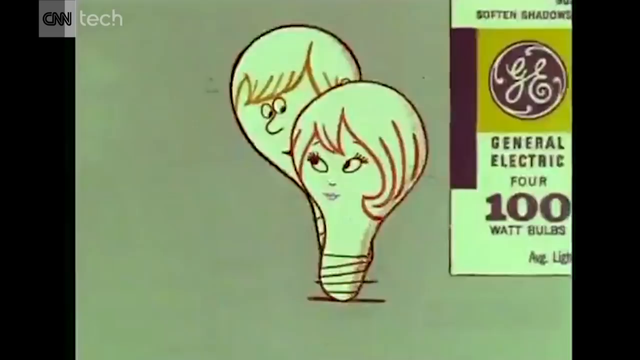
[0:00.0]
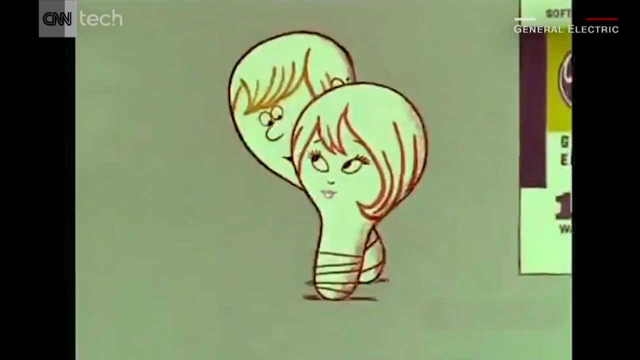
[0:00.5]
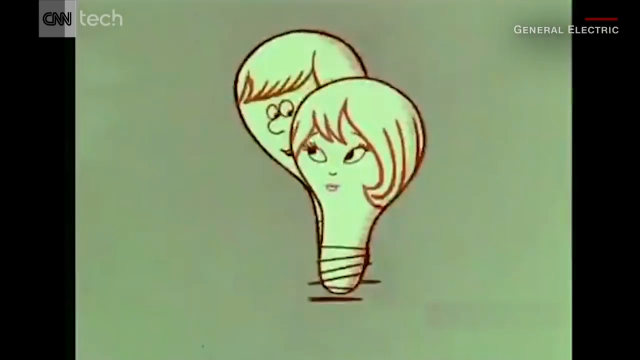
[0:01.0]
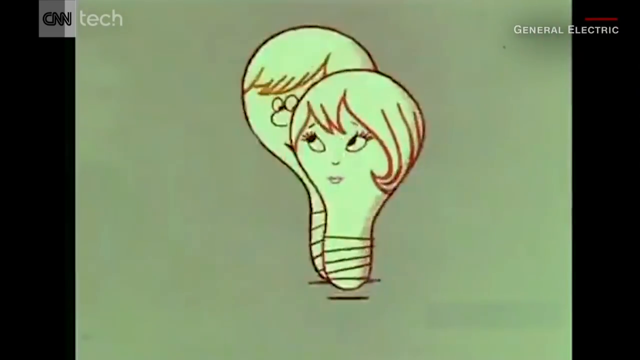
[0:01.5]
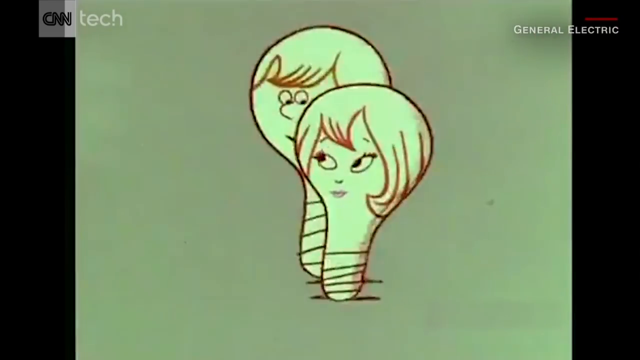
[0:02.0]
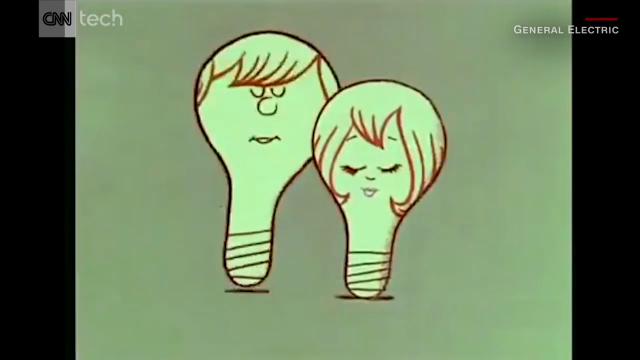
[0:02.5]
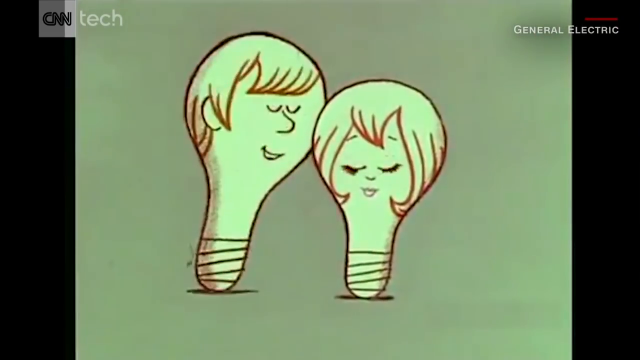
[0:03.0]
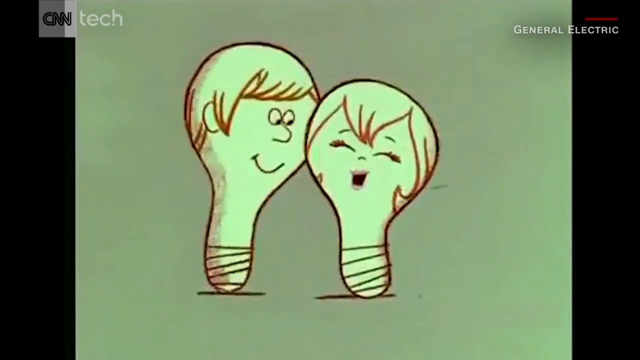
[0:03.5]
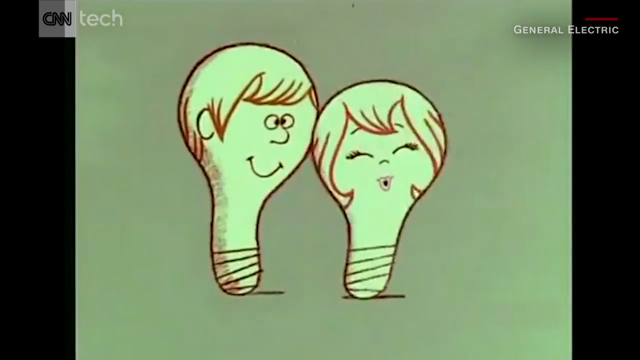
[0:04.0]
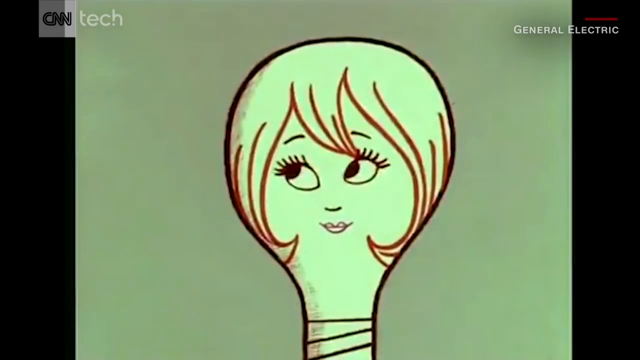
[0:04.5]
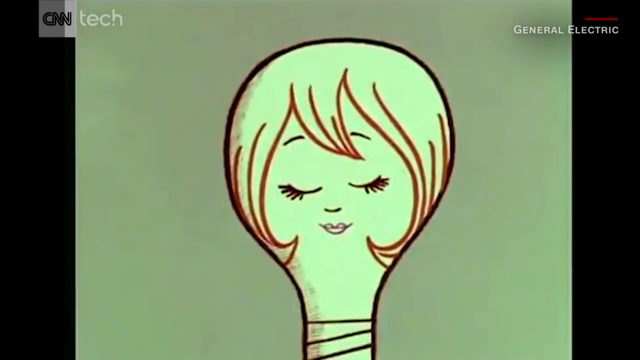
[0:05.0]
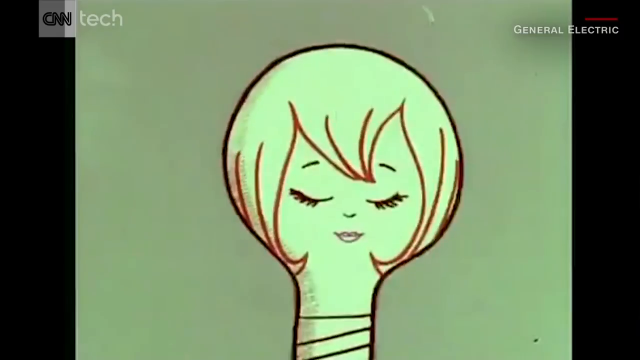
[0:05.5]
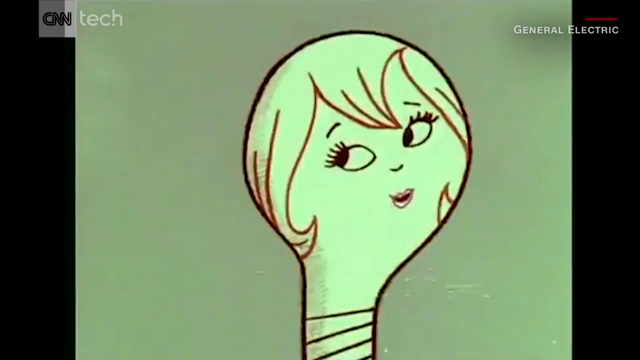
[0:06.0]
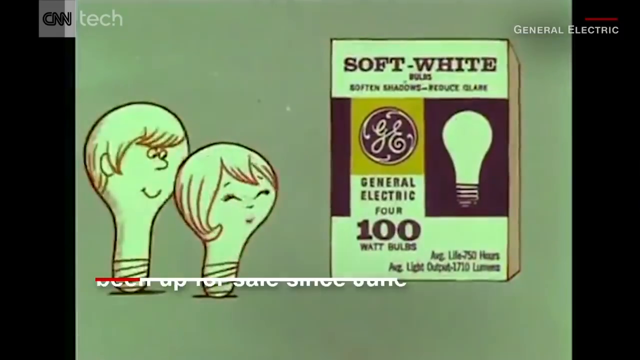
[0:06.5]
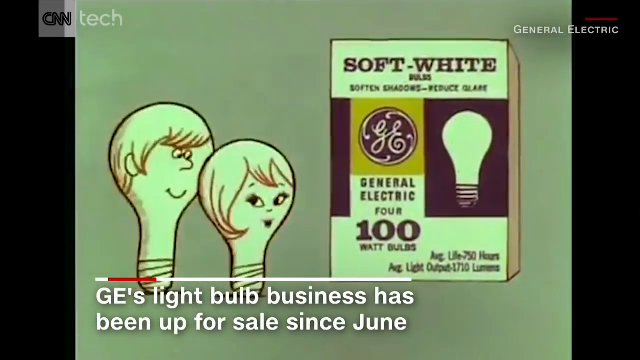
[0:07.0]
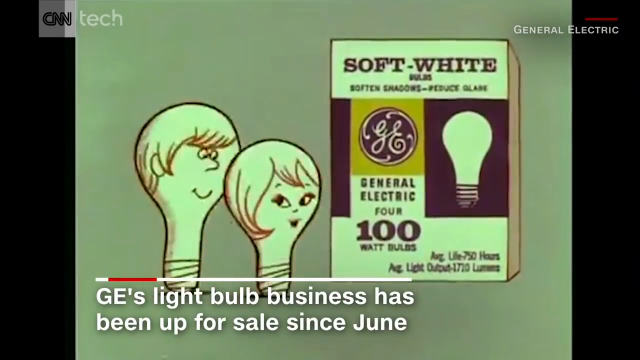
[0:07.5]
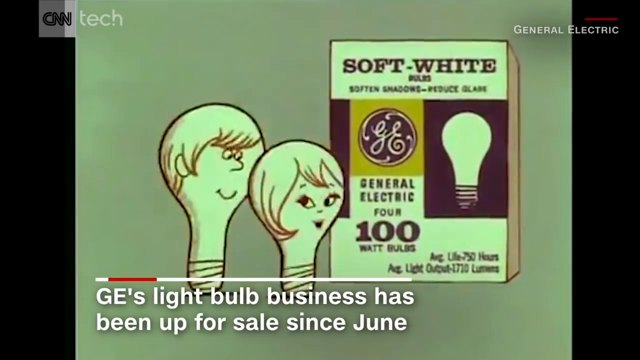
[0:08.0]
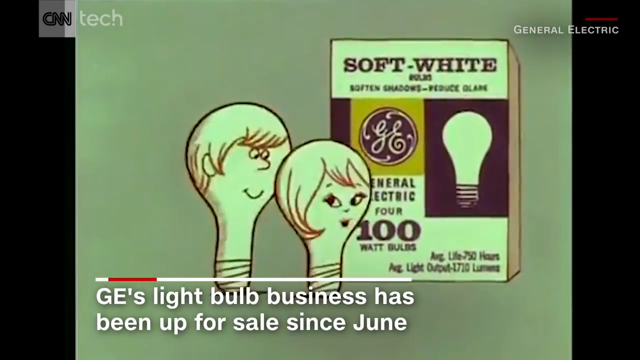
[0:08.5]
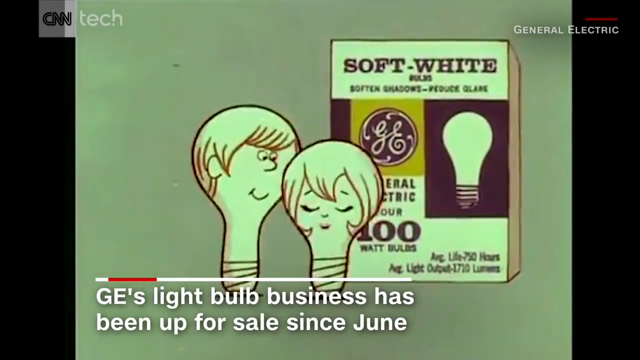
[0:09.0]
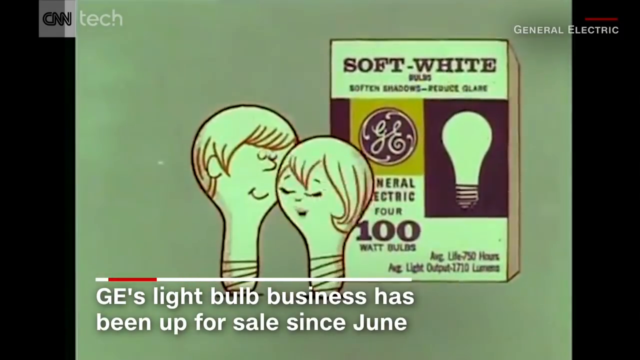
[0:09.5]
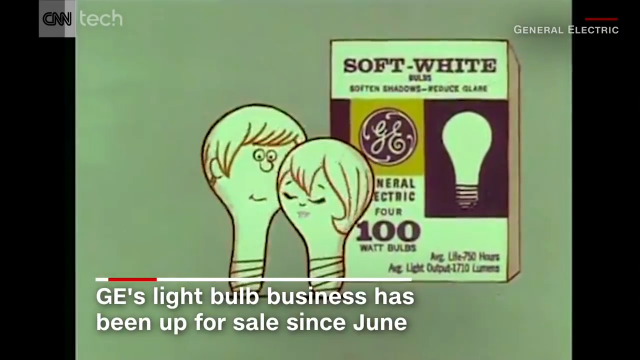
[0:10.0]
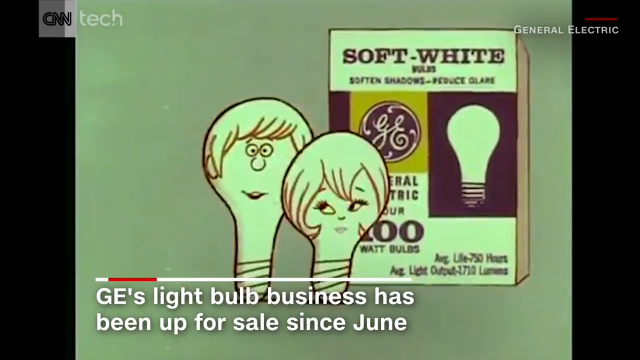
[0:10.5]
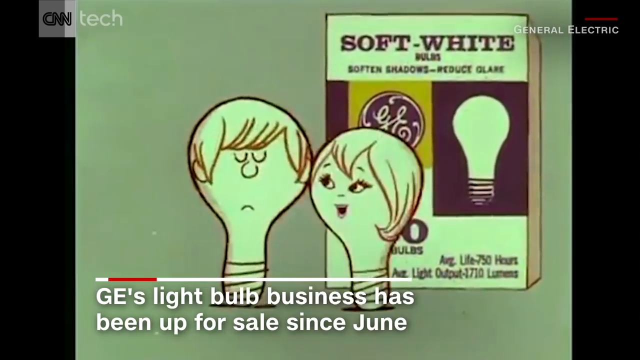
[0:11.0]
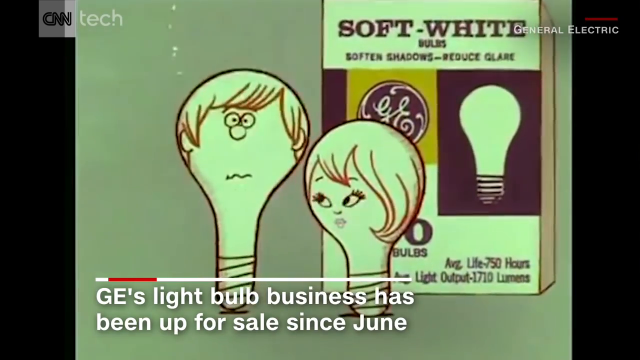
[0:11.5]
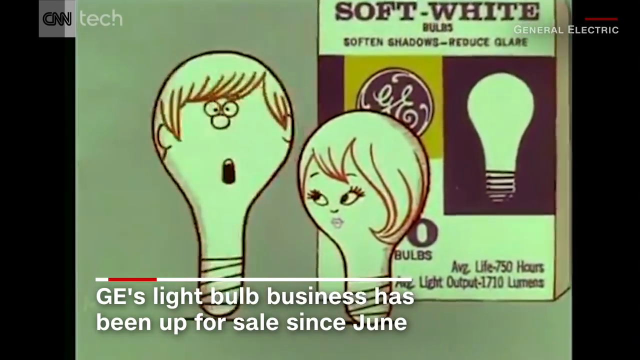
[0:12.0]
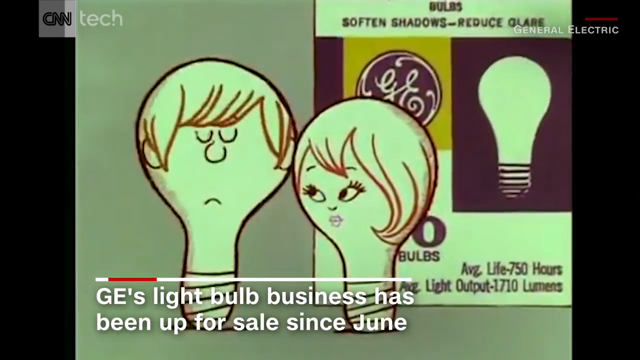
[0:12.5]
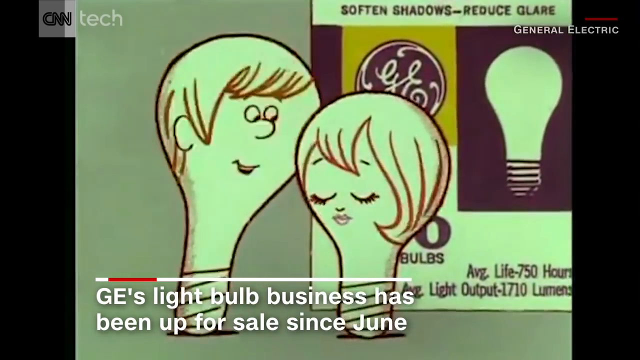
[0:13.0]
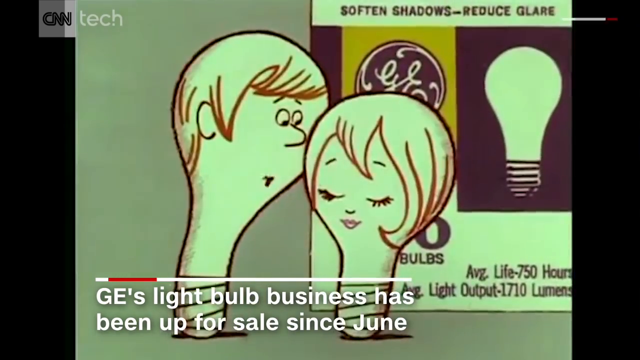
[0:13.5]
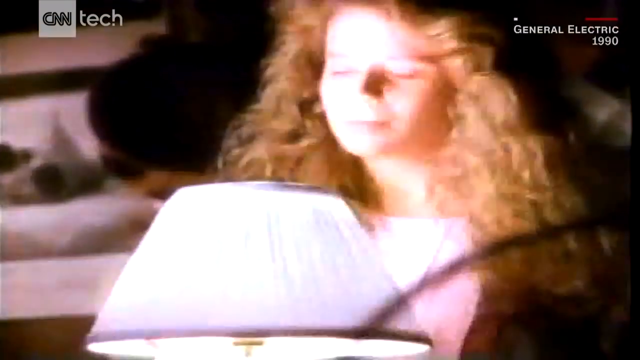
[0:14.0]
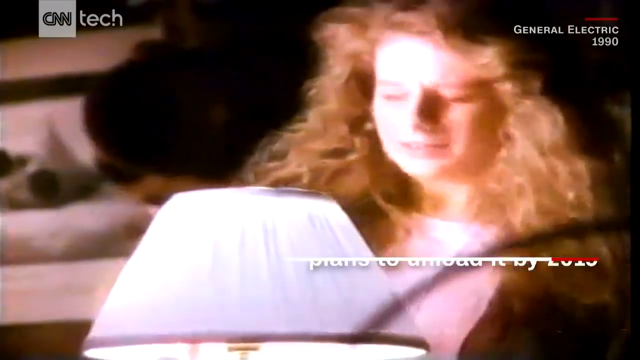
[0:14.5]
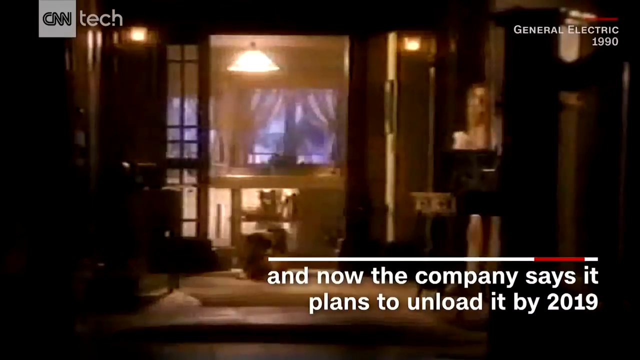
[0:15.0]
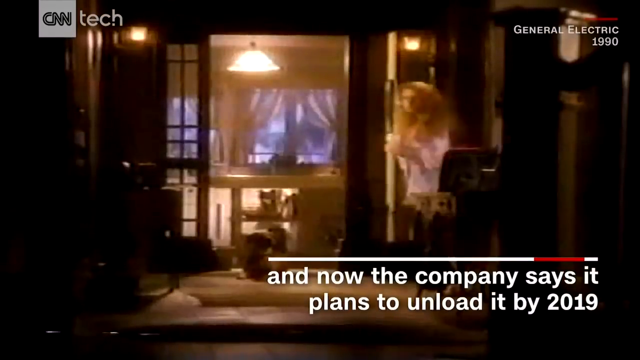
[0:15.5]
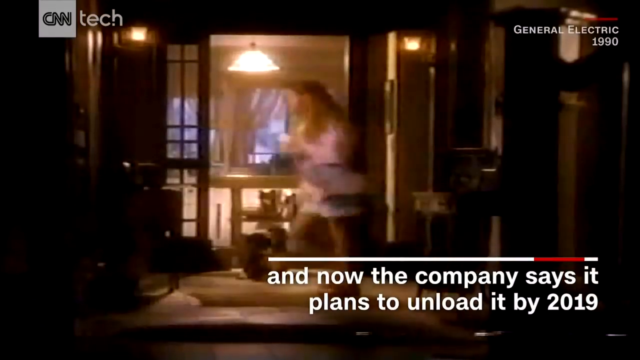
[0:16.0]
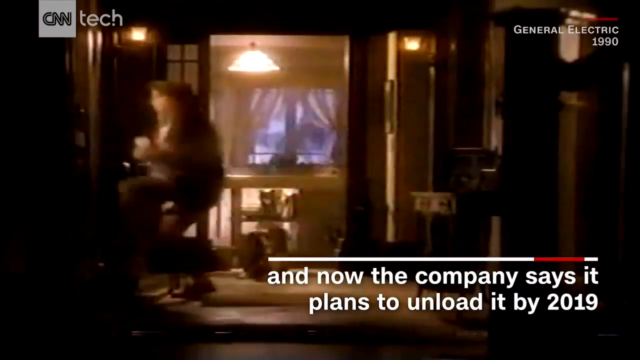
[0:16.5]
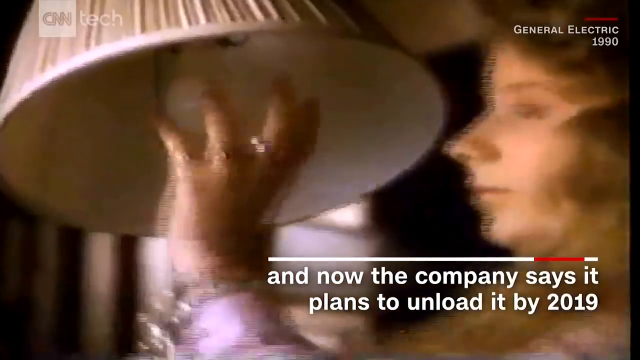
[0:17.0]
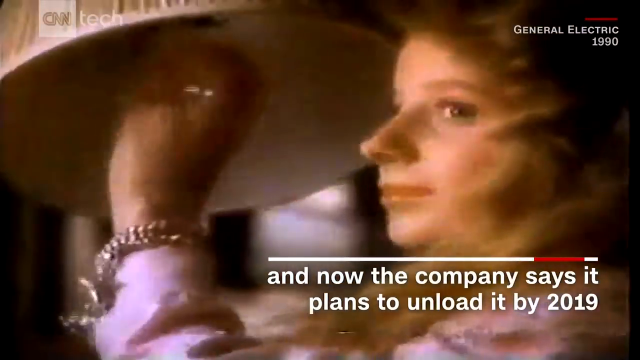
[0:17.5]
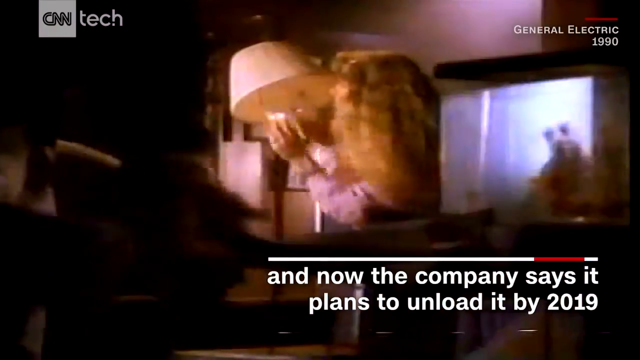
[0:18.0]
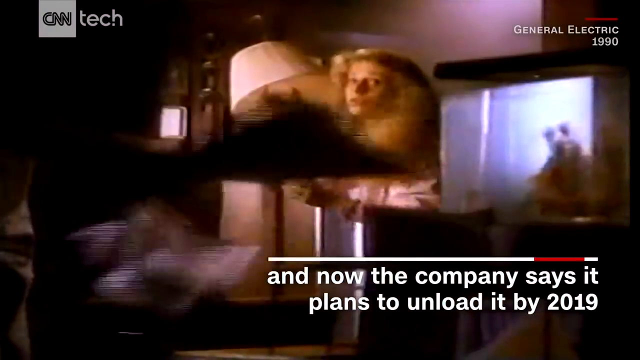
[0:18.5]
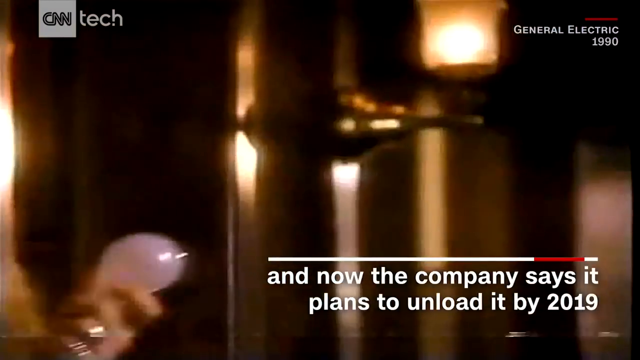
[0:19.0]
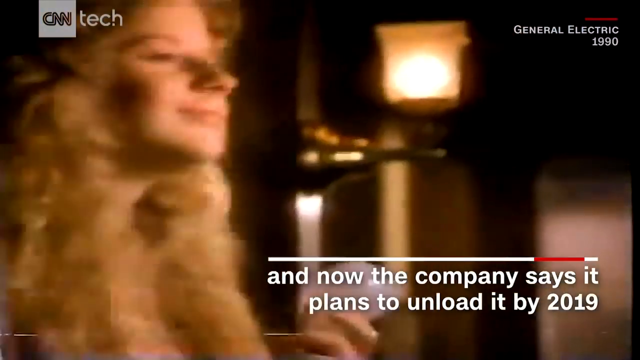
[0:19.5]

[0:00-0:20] The CNN logo is in the top left corner with "CNN Tech" next to it, and "General Electric" appears in the top right corner. The video opens with what appears to be a vintage commercial, possibly from the 60s. Two characters shaped like light bulbs are on screen; both have faces and hairstyles that seemingly make one of them appear female. A box of light bulbs with the GE logo on it is also on screen. The light bulb characters sort of bounce back and forth across the screen and seem to be having a conversation. A pop-up across the bottom of the screen reads "GE light bulb business has been up for sale since June." The characters kind of hop around and are flirty with each other. The video then moves to what is apparently another General Electric commercial, with "General Electric 1990" in the top right corner and text at the bottom reading "and now the company says it plans to unload it by 2019." The setting is inside a home that looks fairly dimly lit. A girl wears a blue or lavender top and white shorts; her wavy hair falls well past her shoulders and looks dark blonde. She goes to a lamp, takes a light bulb, walks across the room, and changes the light bulb in another lamp.